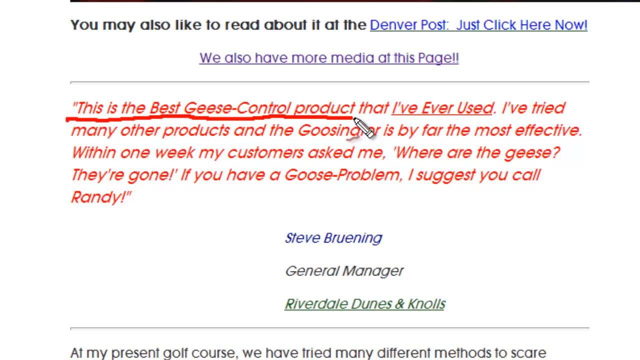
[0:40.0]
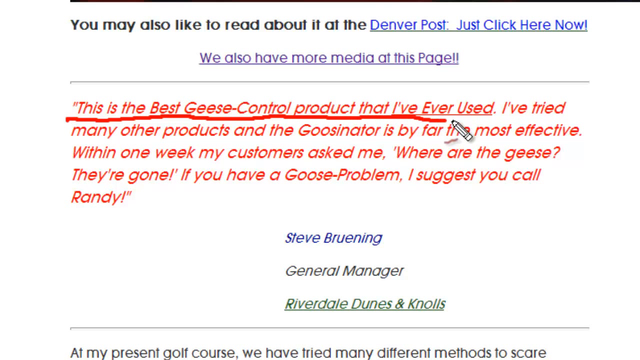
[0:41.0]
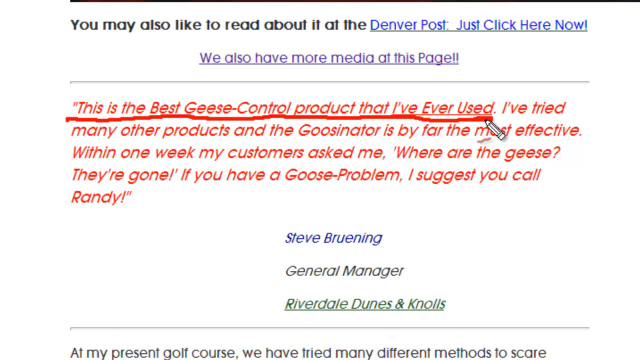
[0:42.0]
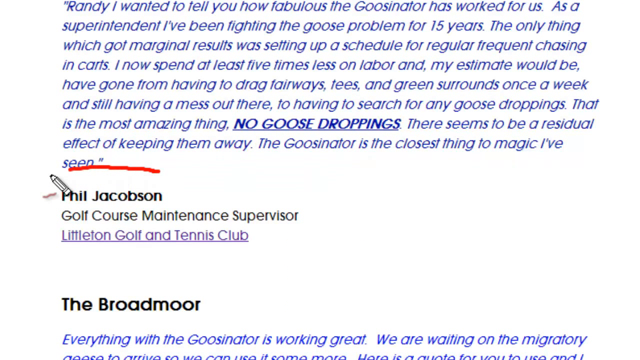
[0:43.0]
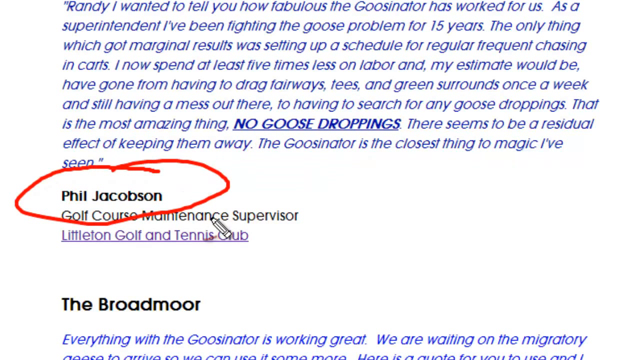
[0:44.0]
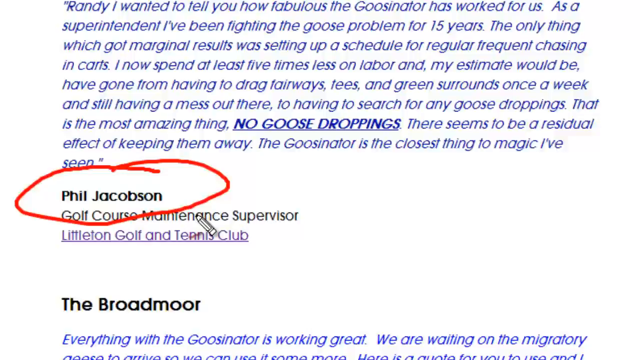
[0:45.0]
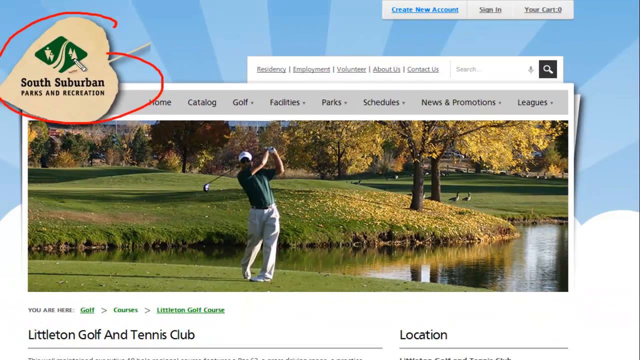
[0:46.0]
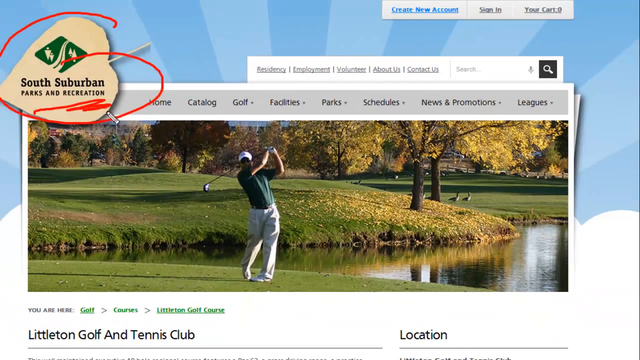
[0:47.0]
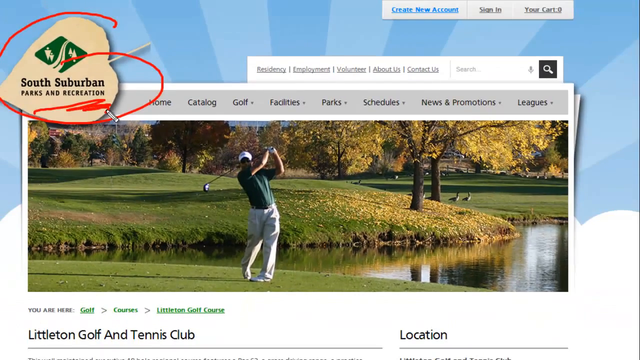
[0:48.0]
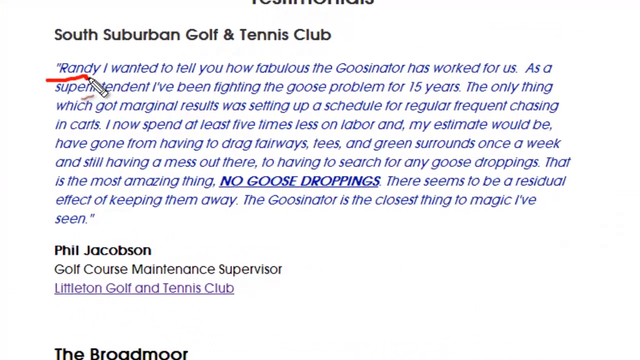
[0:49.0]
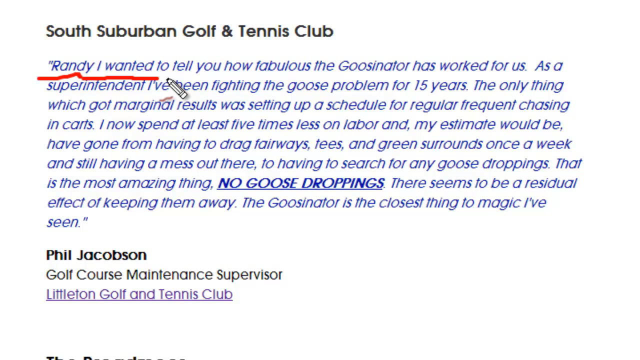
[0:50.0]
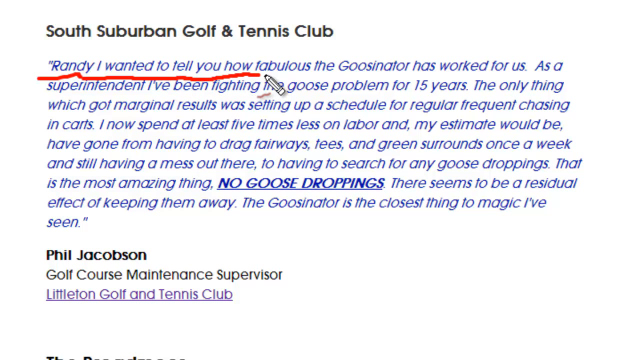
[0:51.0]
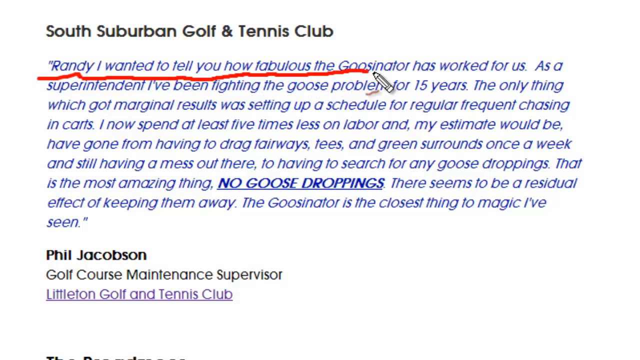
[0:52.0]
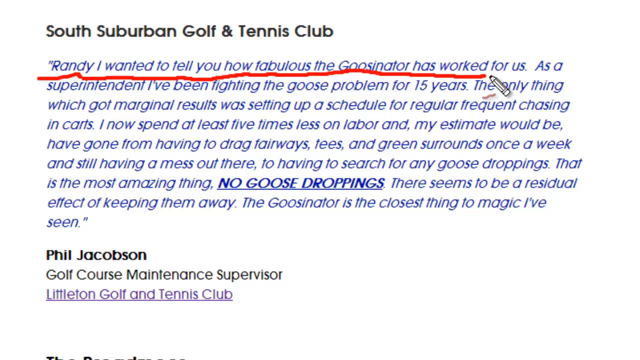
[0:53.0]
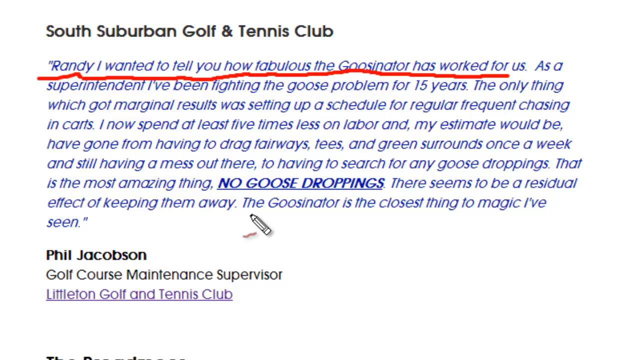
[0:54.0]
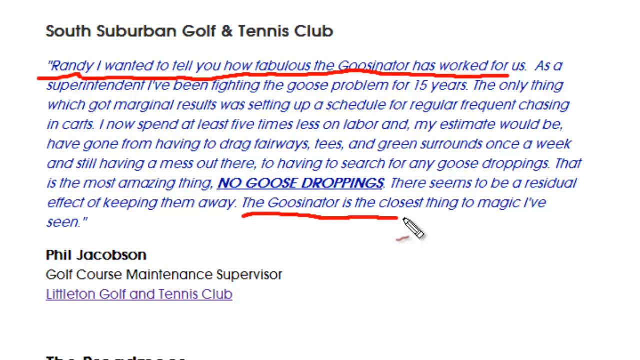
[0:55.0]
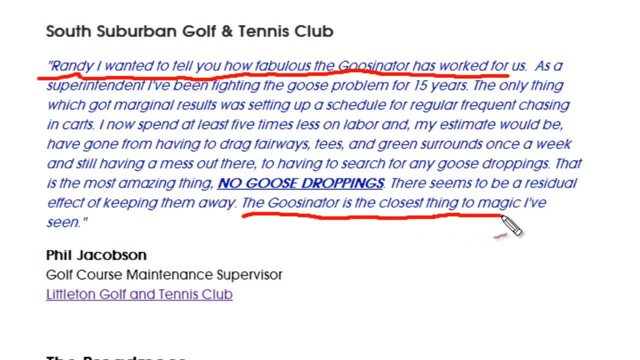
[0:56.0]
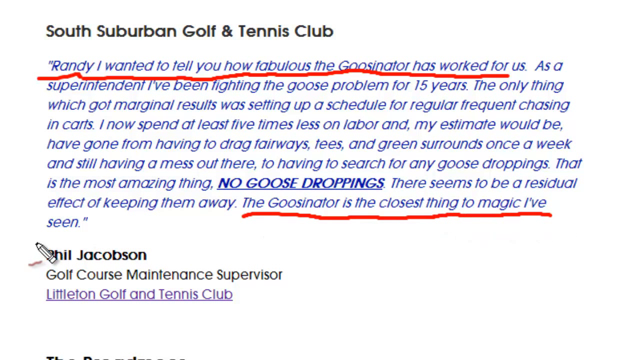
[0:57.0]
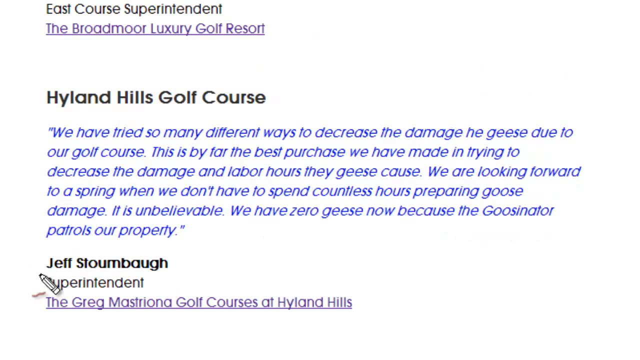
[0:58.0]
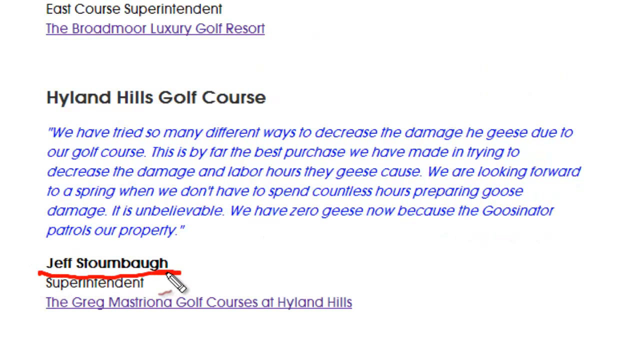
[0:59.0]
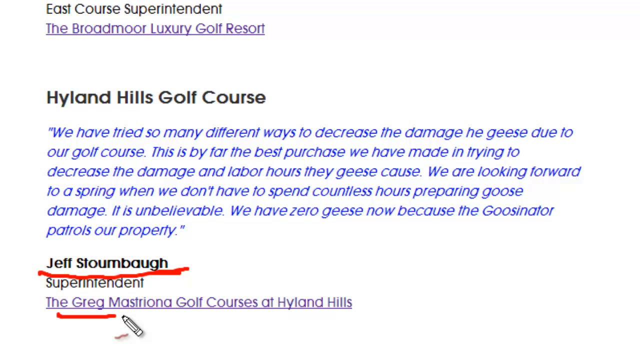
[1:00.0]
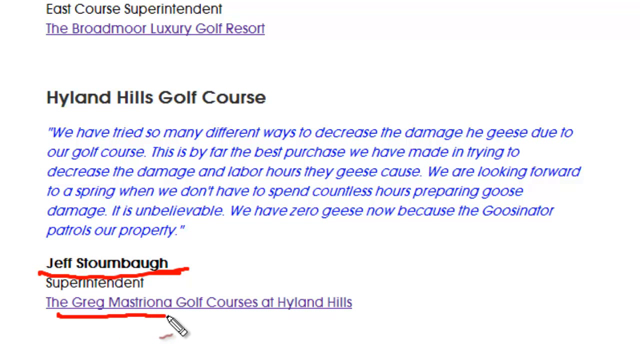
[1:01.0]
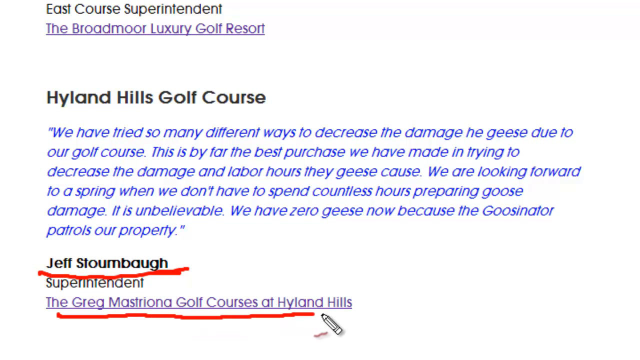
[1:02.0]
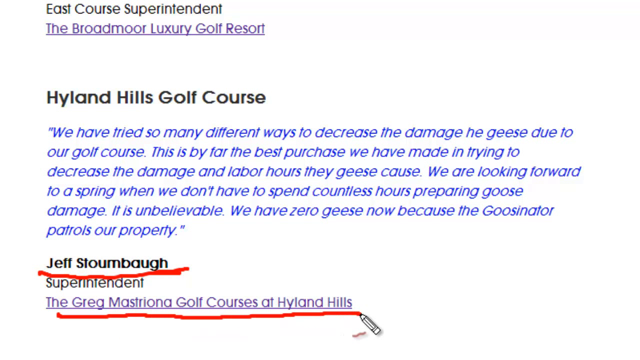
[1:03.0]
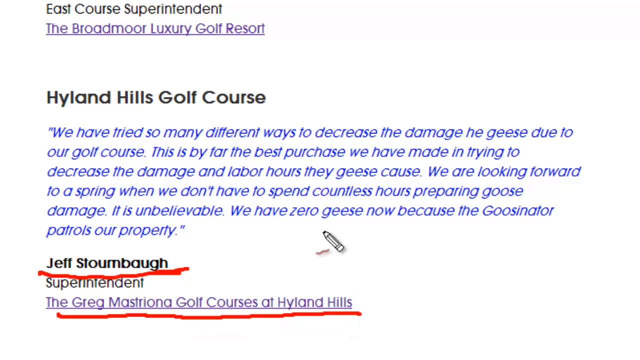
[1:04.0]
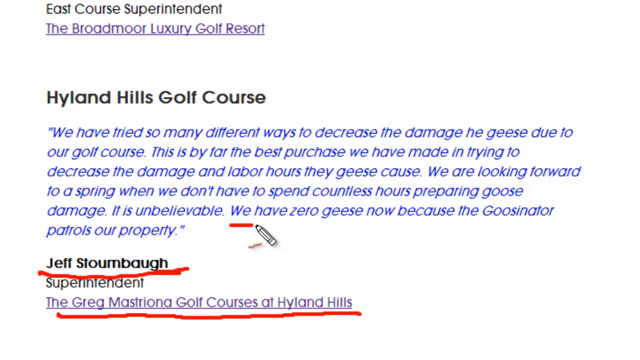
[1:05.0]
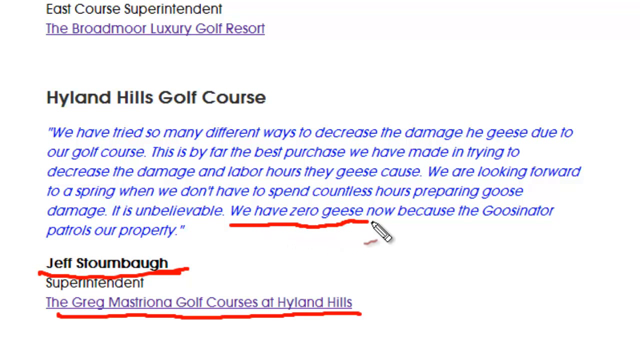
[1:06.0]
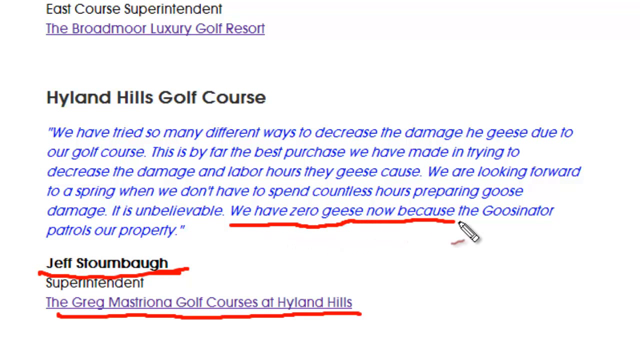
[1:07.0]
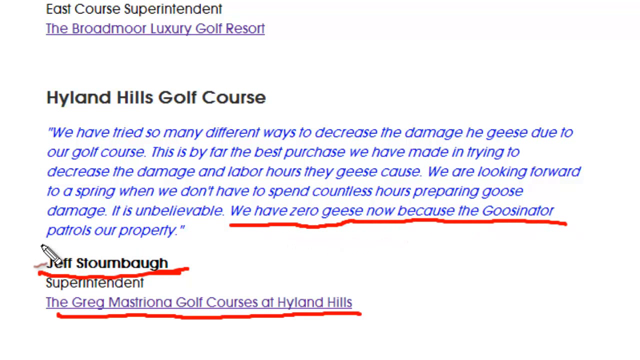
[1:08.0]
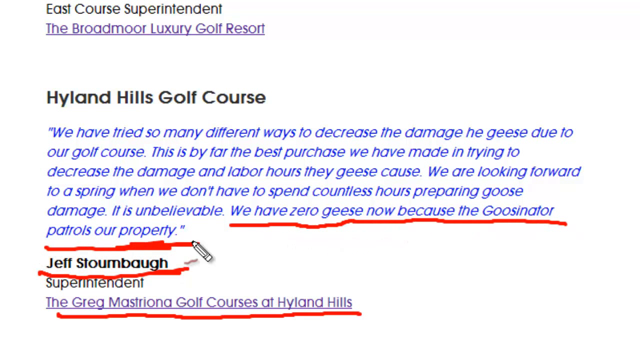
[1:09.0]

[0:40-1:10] A pen icon underlines text on possibly a web page: "This is the Best Geese-Control product that I've ever used", which seems to be a review by Steve Bruening, a general manager at Riverdale Dunes and Knolls. The video transitions to another page, possibly another review for The Goosinator, by Phil Jacobson, a golf course maintenance supervisor at Littleton Golf and Tennis Club. Next comes what is possibly the homepage of the South Suburban Parks and Recreation website, where the pen icon underlines the website logo at the top right of the screen. The video returns to what is possibly the earlier review by Phil Jacobson, and the pen icon underlines the first sentence and the last sentence of the review. Another review, by Jeff Stoumbaugh, follows; the pen icon underlines his name in red, then his place of work, and then the last sentence of his review.